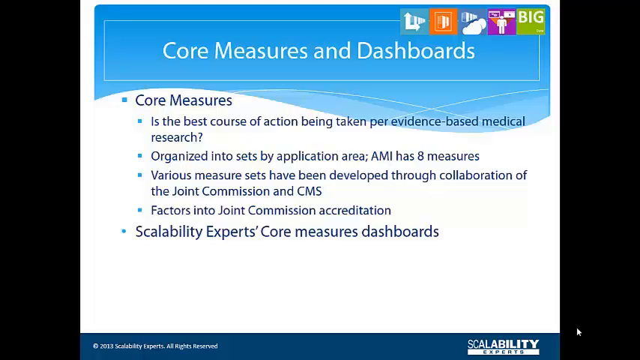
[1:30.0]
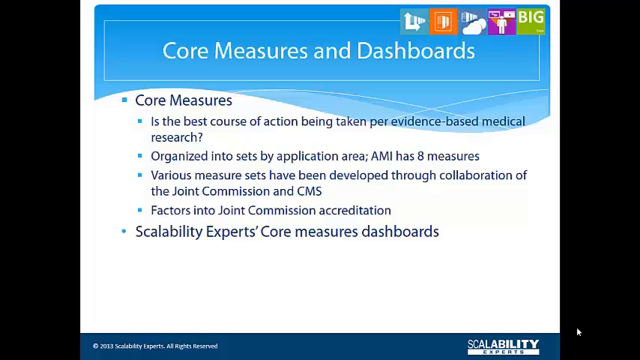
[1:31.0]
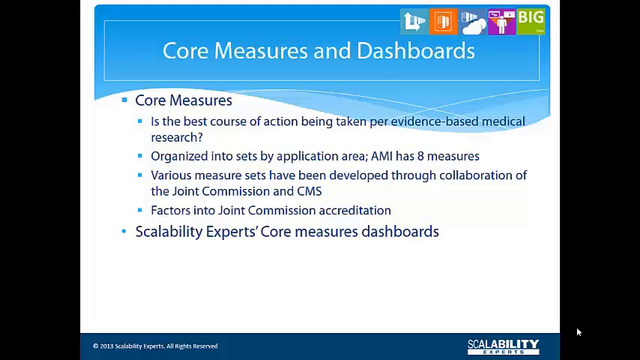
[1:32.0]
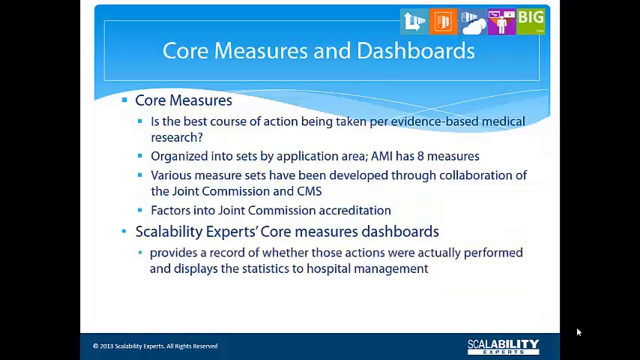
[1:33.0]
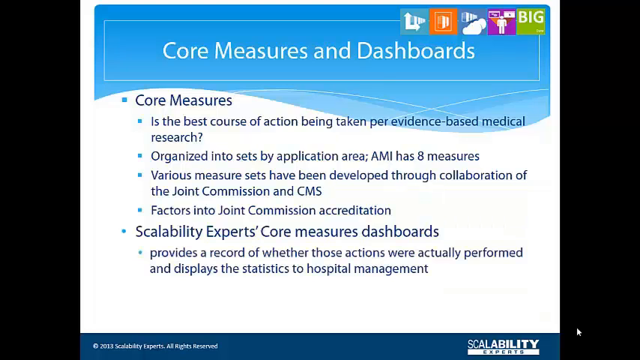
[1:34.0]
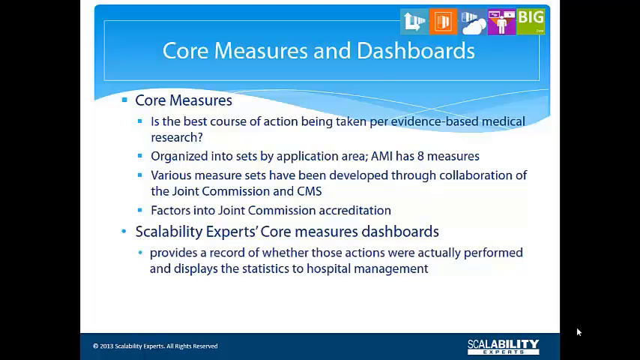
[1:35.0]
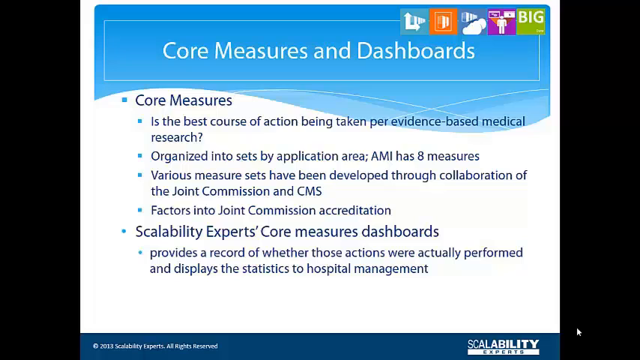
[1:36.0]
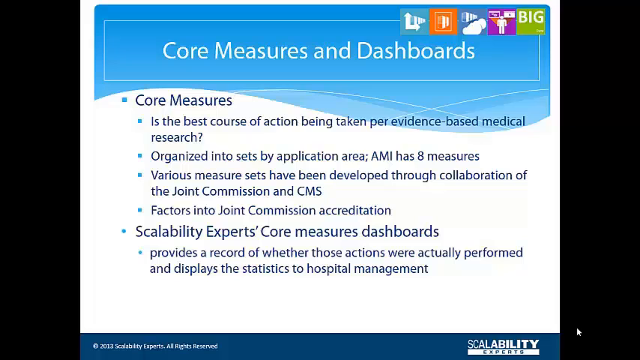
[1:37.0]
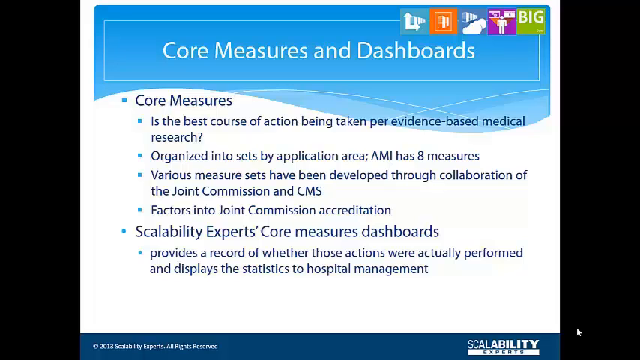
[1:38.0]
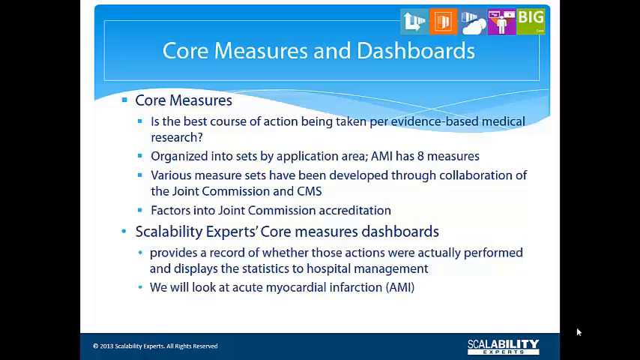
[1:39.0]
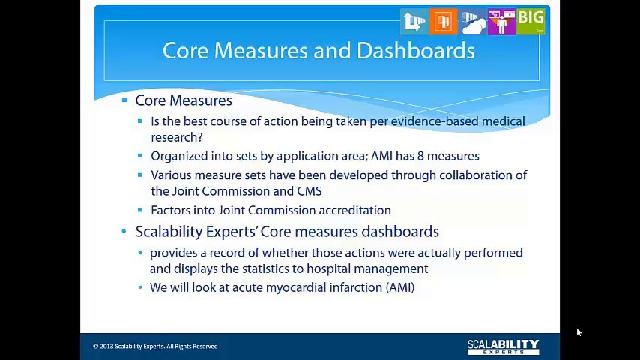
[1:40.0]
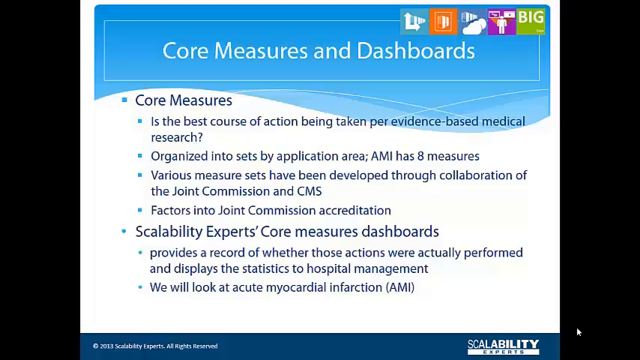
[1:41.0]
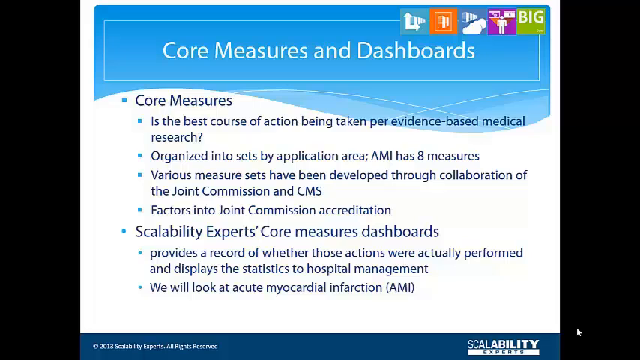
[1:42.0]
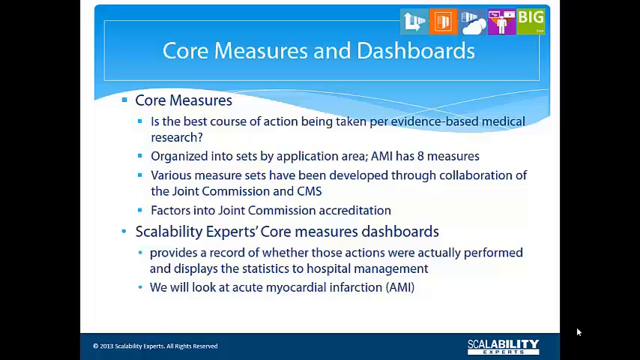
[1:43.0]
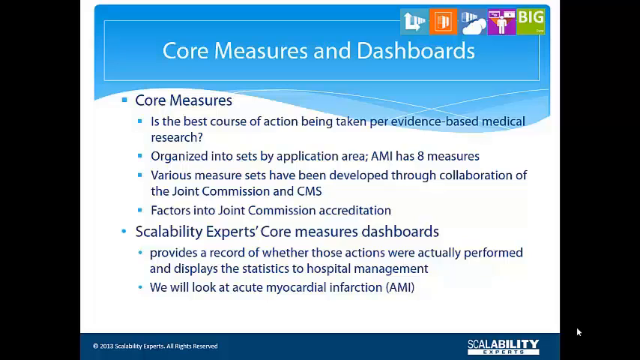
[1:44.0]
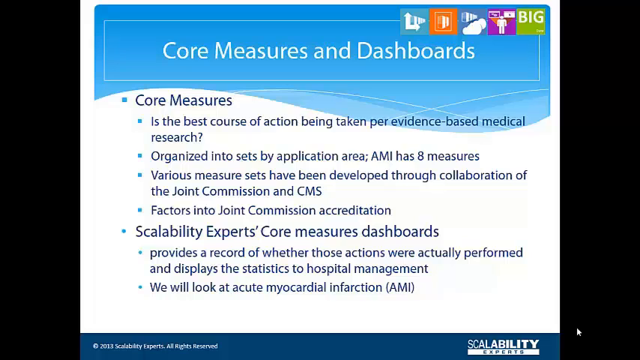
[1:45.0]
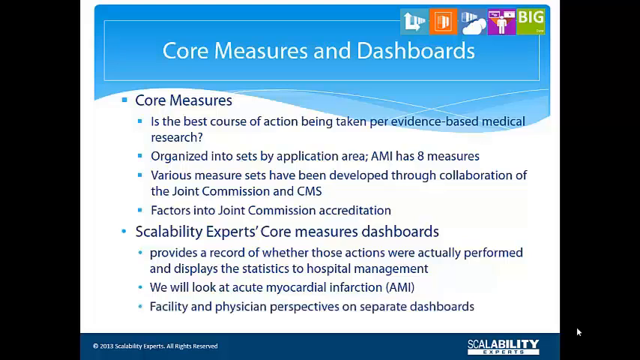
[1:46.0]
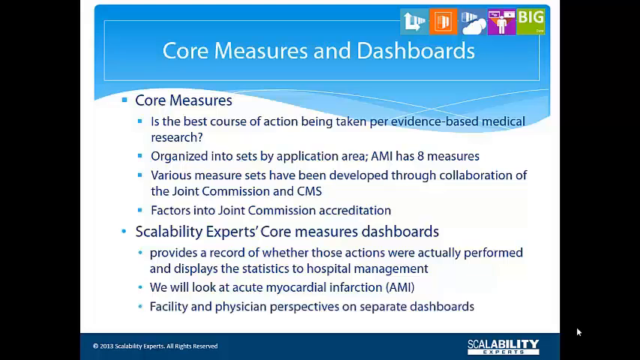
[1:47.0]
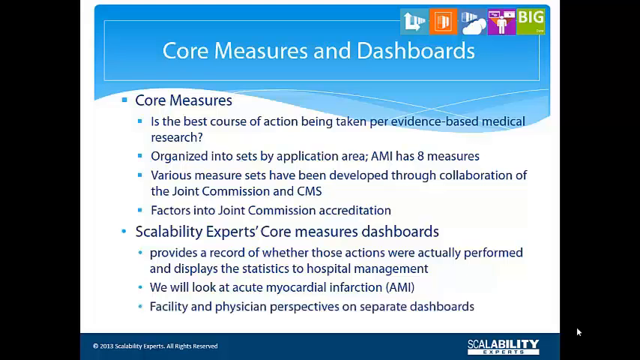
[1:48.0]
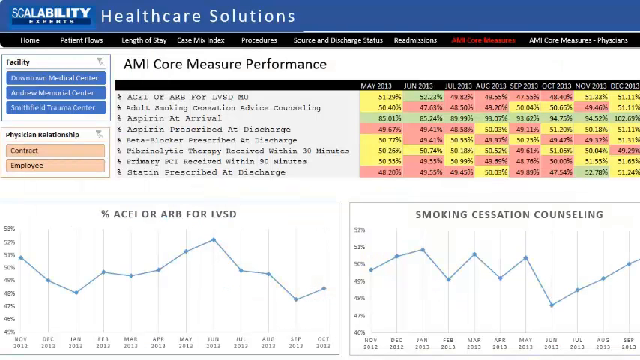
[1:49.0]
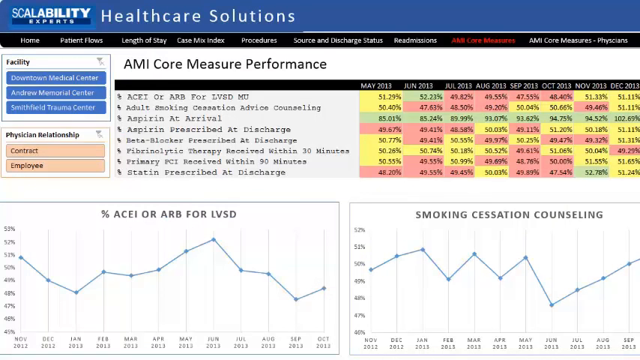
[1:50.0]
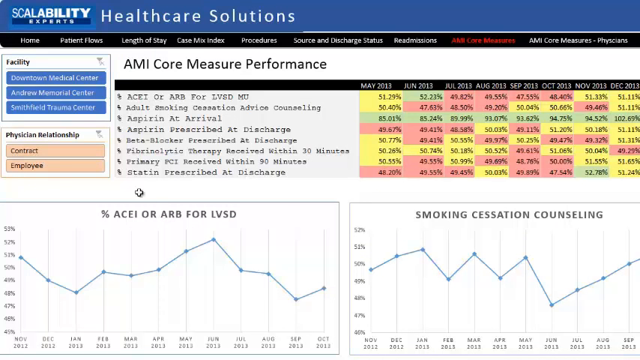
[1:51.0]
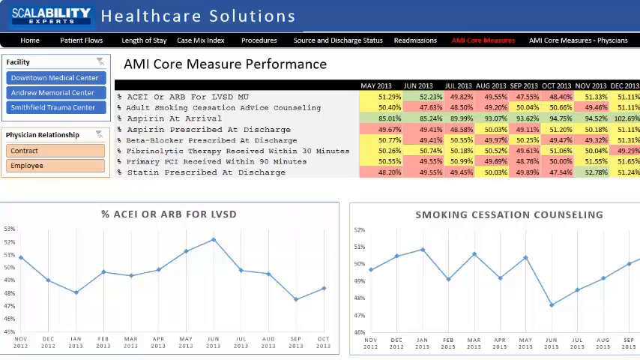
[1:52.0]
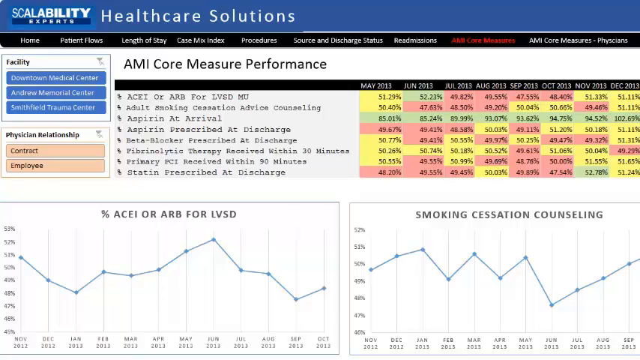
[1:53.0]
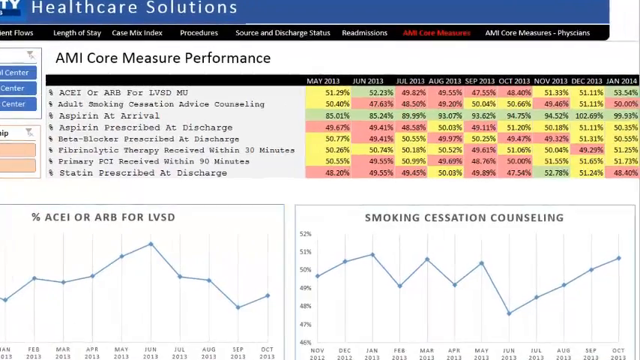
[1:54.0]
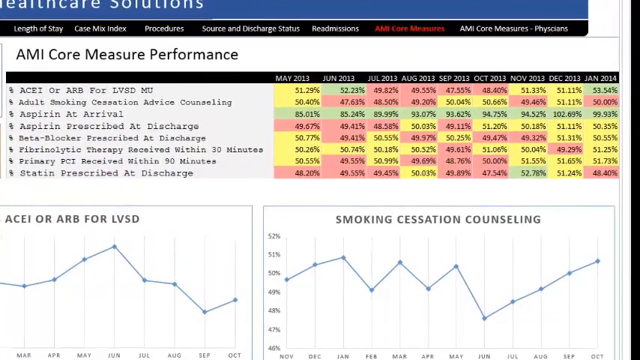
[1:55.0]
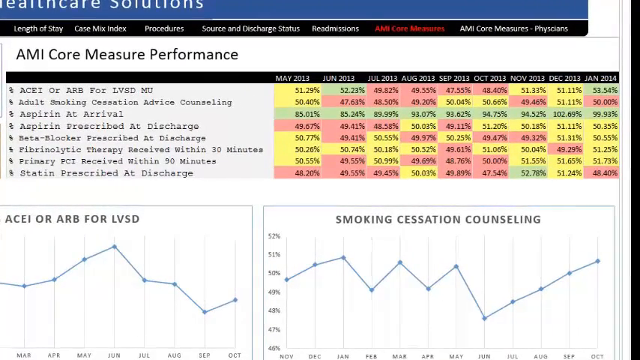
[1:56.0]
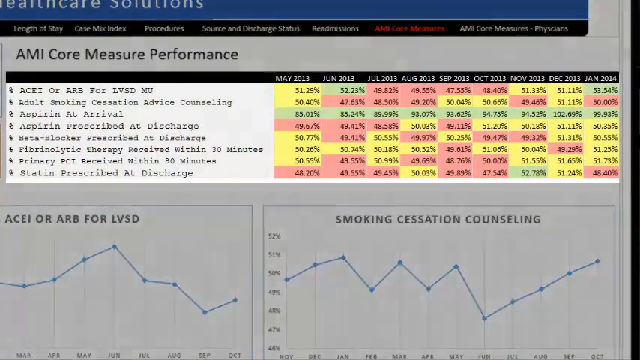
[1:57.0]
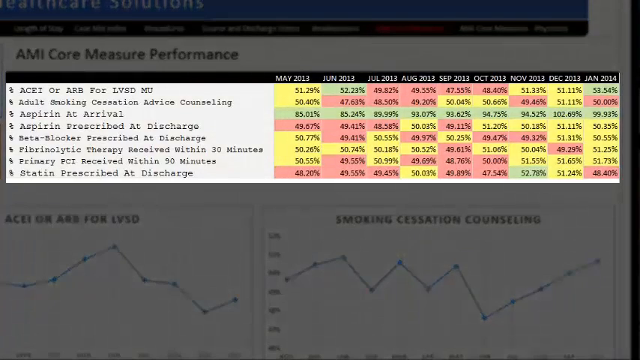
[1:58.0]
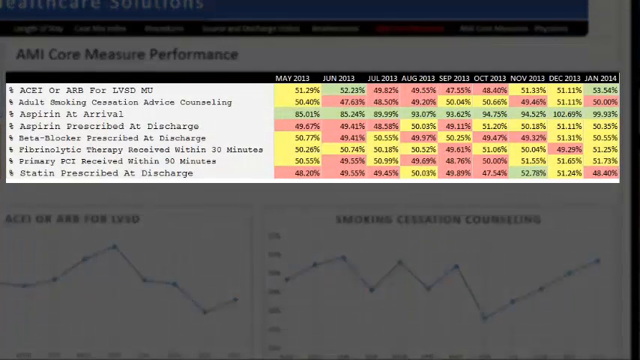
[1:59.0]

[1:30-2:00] The screen keeps the same format. The title, "Core measures and dashboards", is in the somewhat rectangular blue section that curves down toward its end. Below the title is the heading "Core measures" with five bullet points underneath: "Is the best course of action being taken per evidence-based medical research?", "Organized into sets by application area. AMI has eight measures.", "Various measure sets have been developed through collaboration of the Joint Commission and CMS", "Factors into Joint Commission accreditation", and "Scalability experts, core measurements, dashboards". This text is in black on a mostly white portion of the slide, except where the upper blue box dips into it.